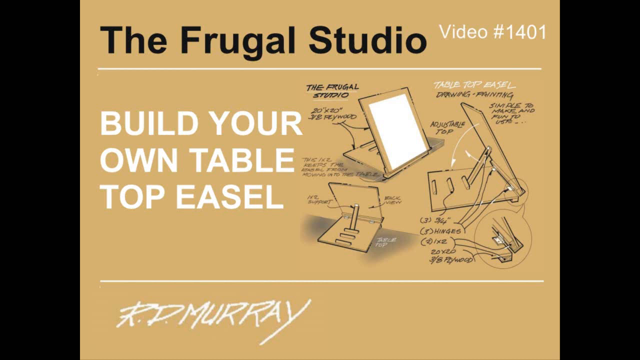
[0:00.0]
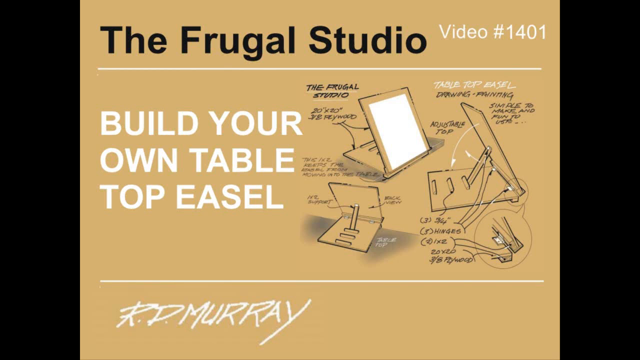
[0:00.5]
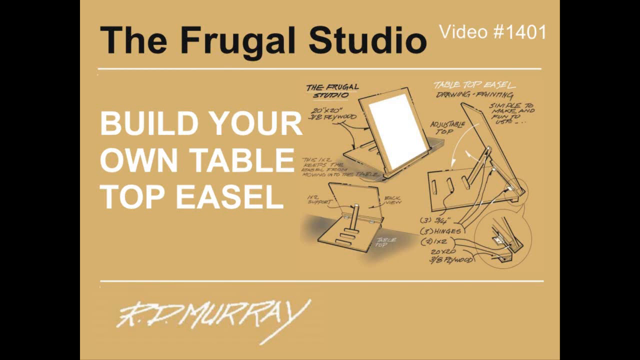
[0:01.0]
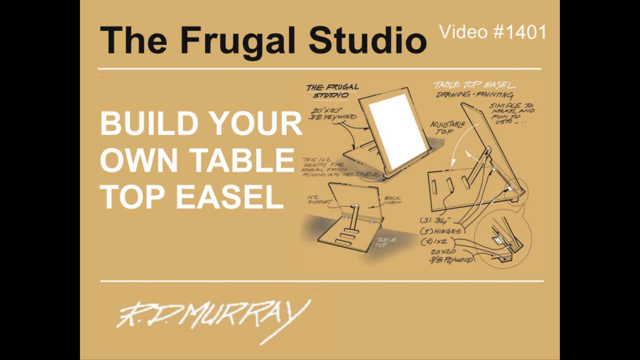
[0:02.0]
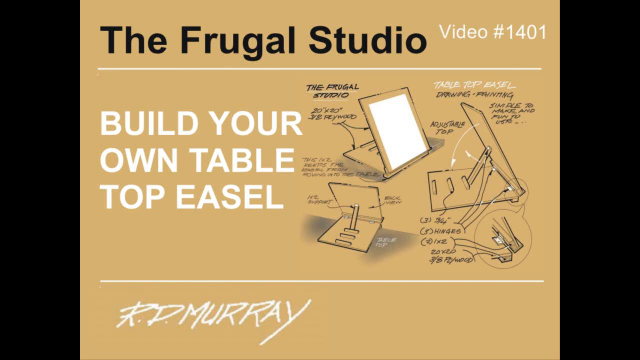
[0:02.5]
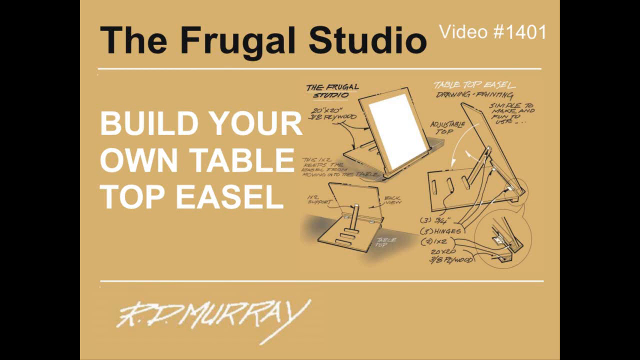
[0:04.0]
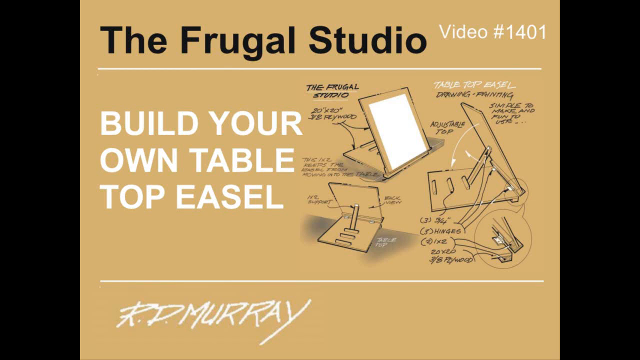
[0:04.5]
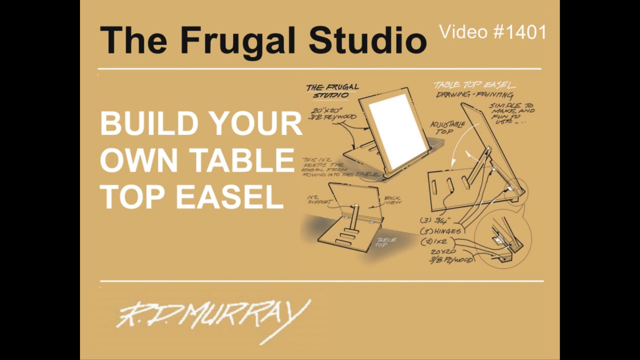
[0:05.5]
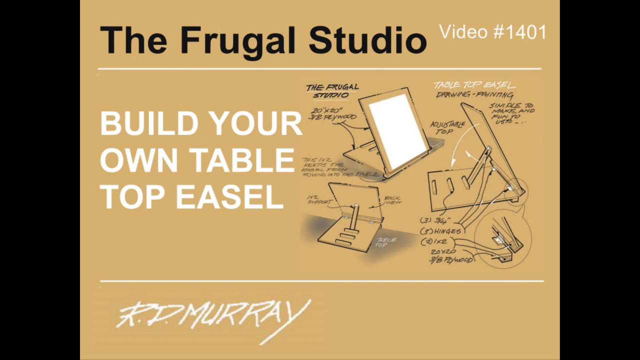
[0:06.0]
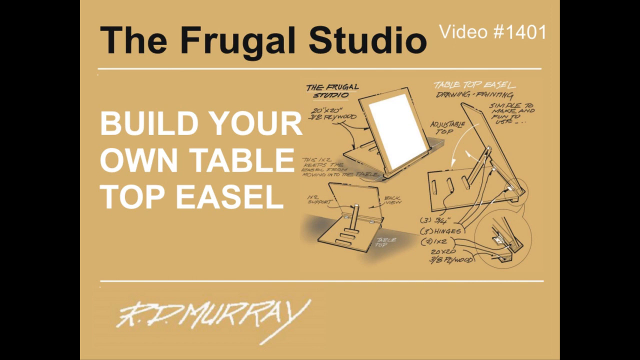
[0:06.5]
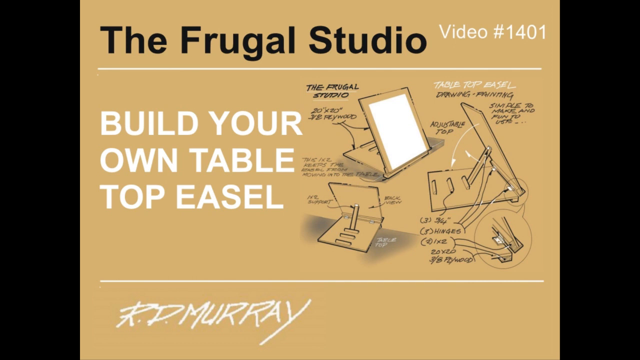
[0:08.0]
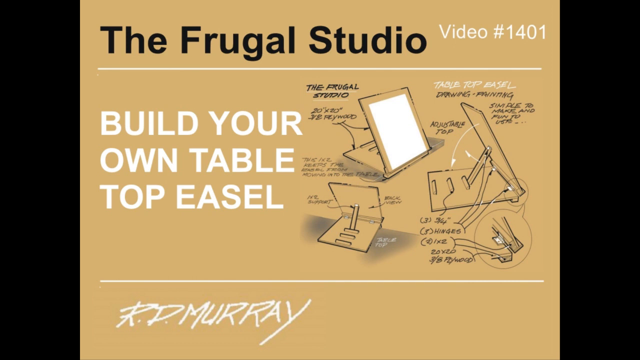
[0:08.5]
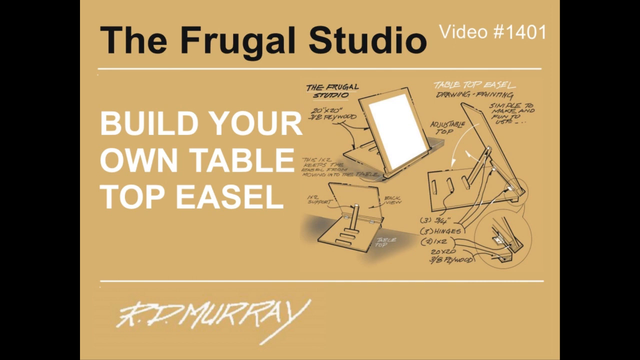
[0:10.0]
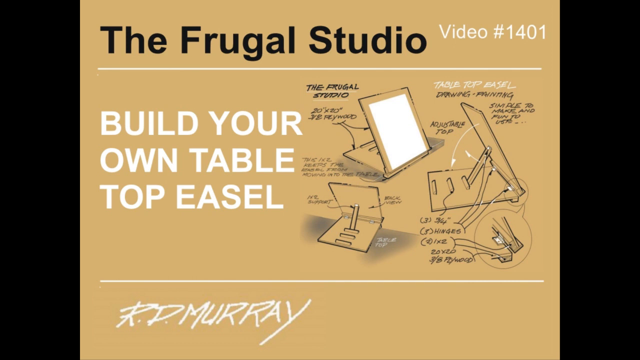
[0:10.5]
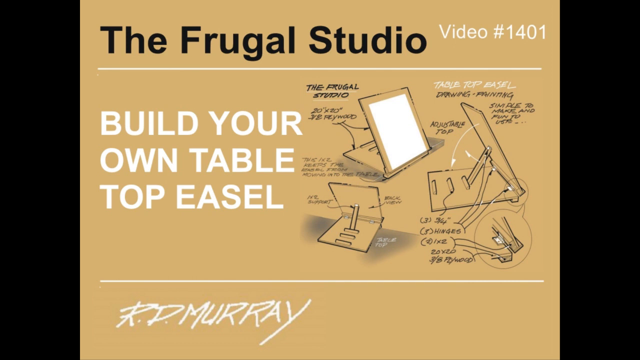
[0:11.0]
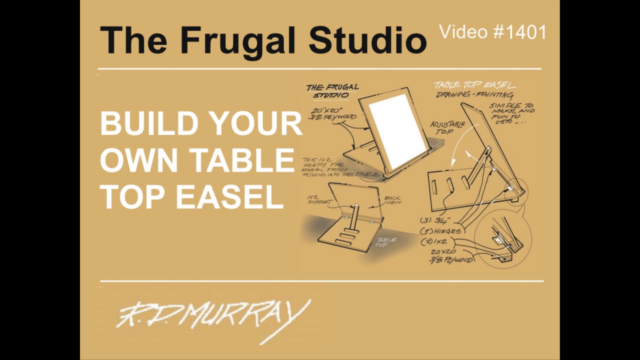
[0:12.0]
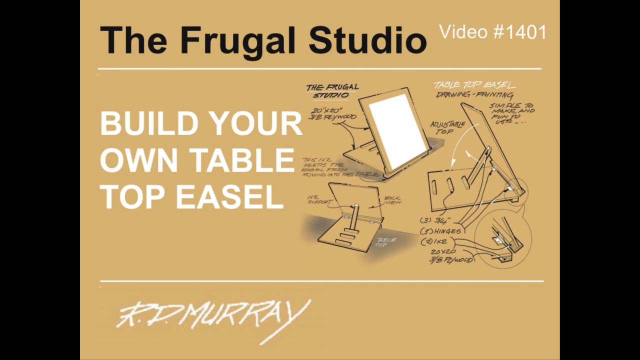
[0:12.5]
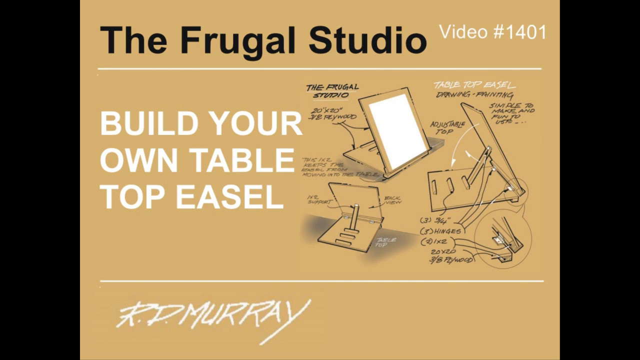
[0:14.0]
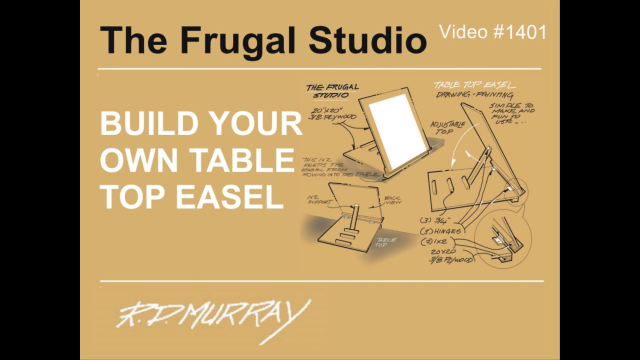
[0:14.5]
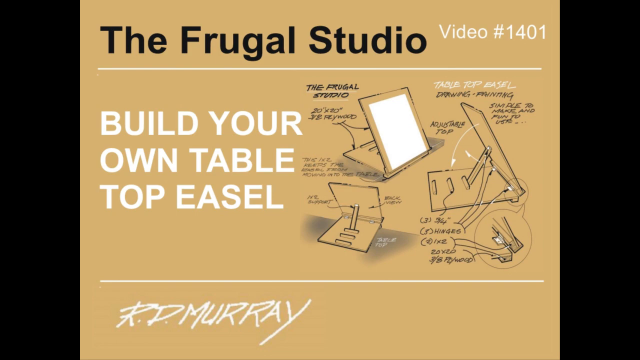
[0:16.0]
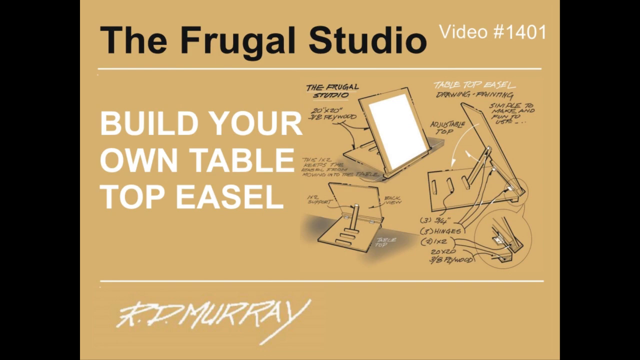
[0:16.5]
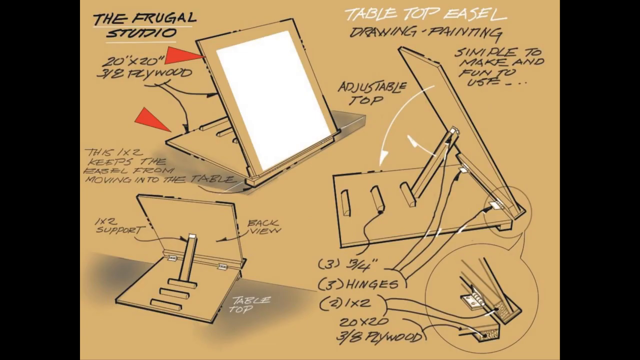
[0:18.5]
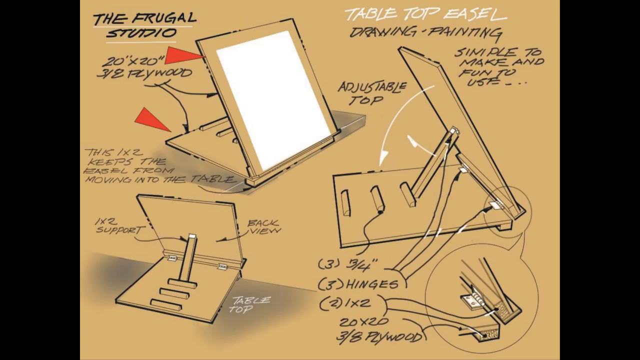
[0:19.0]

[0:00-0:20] A video by Mr. R. D. Murray at Frugal Studios gives a simple step-by-step explanation of how to build a tabletop easel for drawing and painting. The materials required are three 20 by 20 plywood, three hinges and an adjustable top. The video shows how to keep the easel from moving into the table, how to put the hinges at the back, and how the hinges offer support at the back.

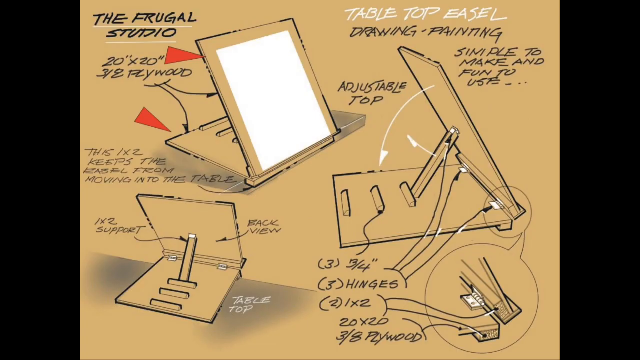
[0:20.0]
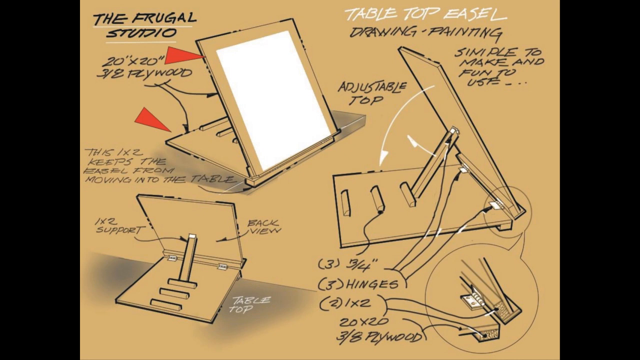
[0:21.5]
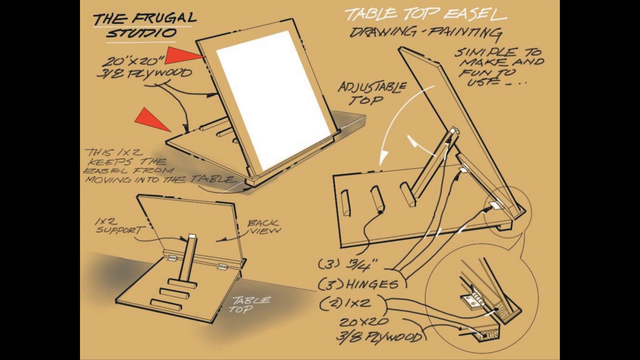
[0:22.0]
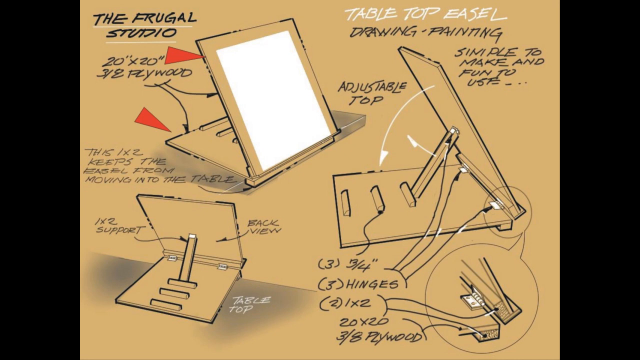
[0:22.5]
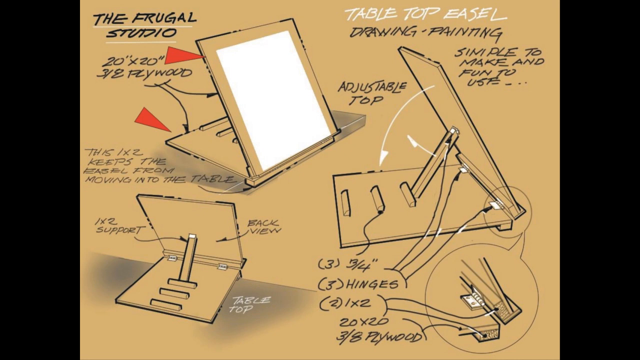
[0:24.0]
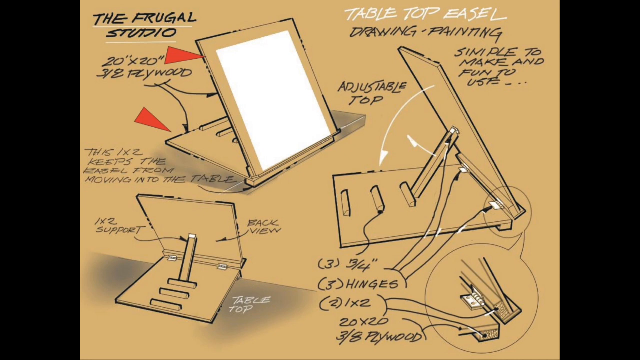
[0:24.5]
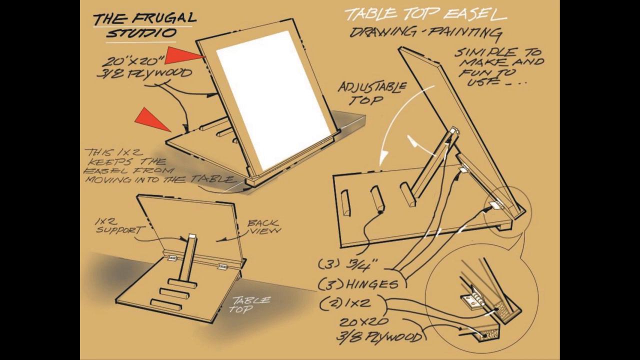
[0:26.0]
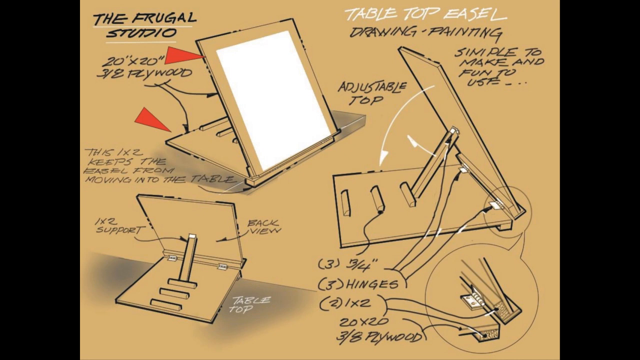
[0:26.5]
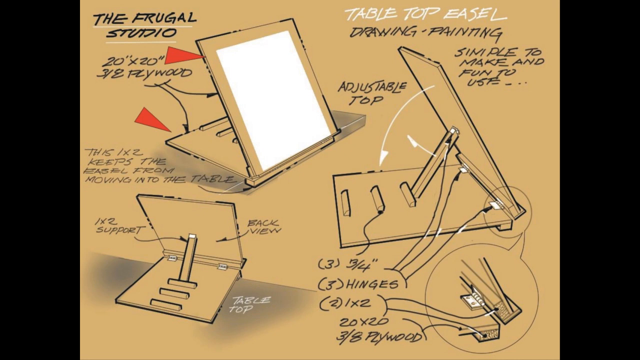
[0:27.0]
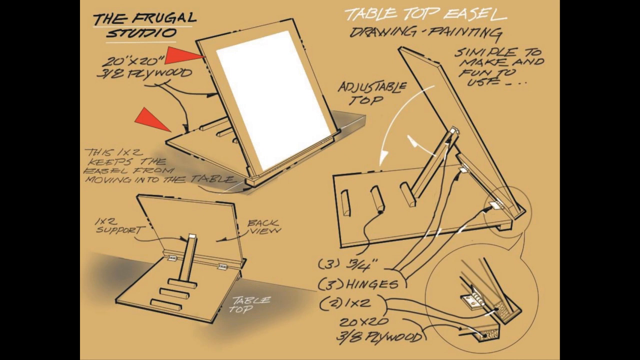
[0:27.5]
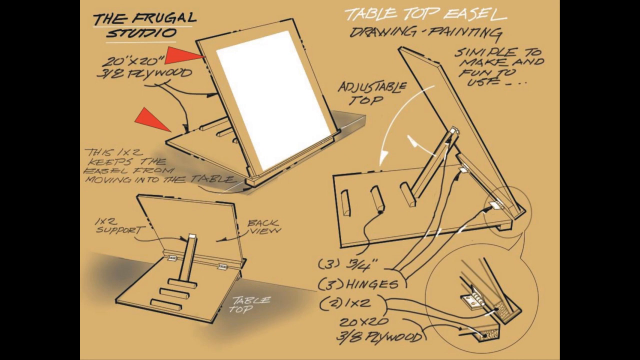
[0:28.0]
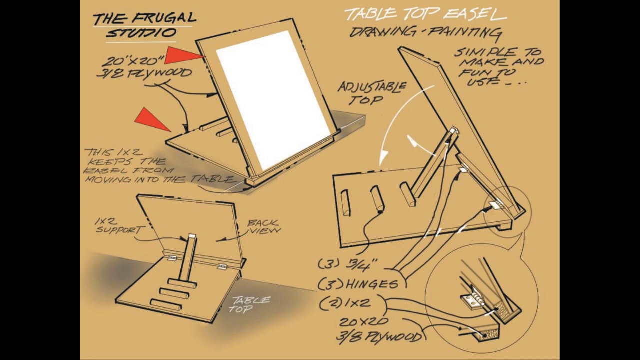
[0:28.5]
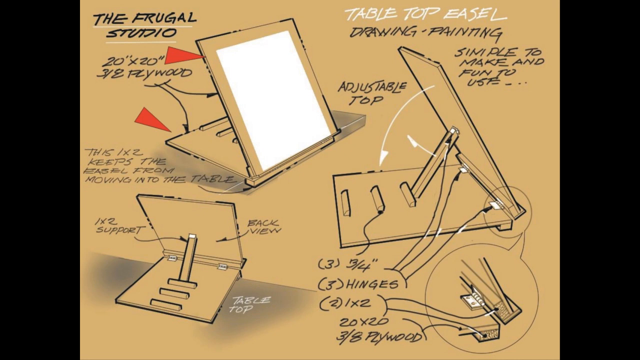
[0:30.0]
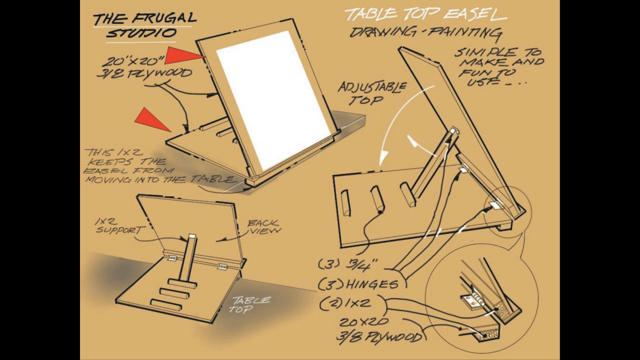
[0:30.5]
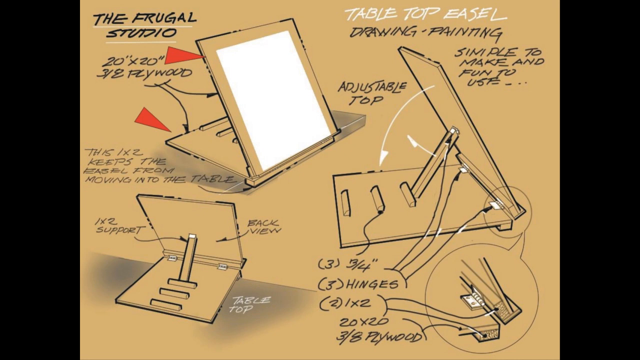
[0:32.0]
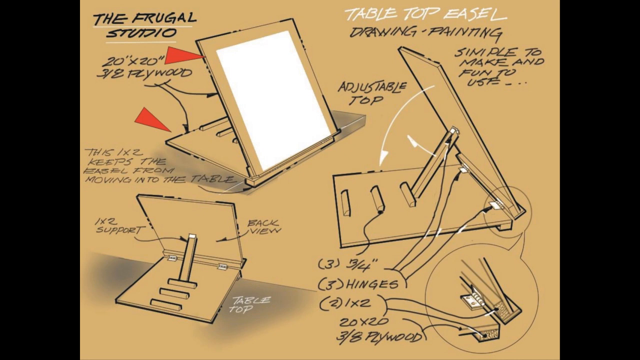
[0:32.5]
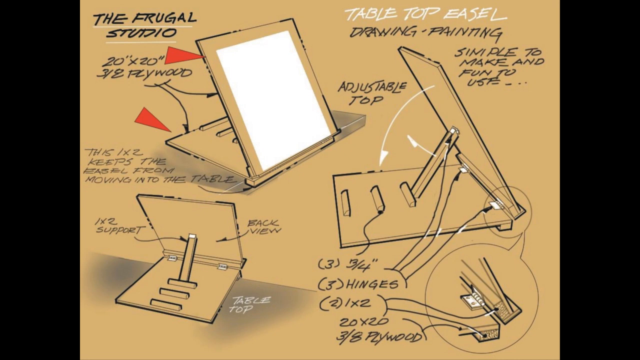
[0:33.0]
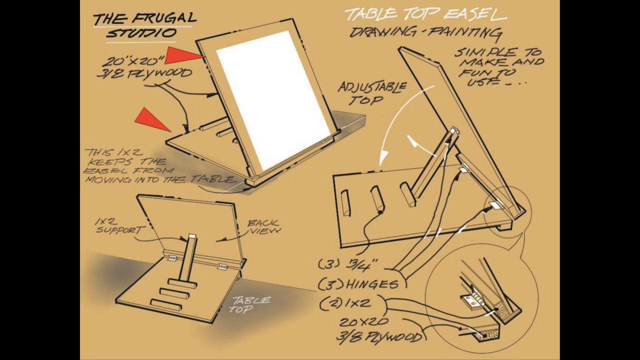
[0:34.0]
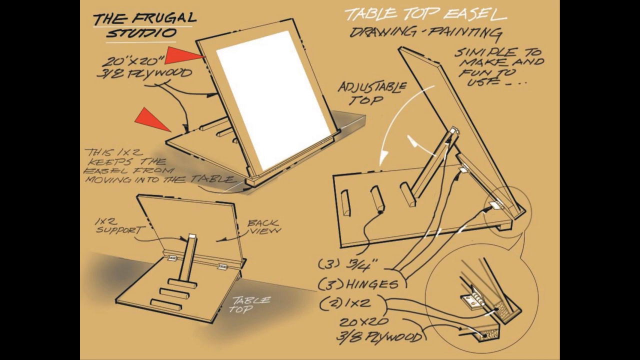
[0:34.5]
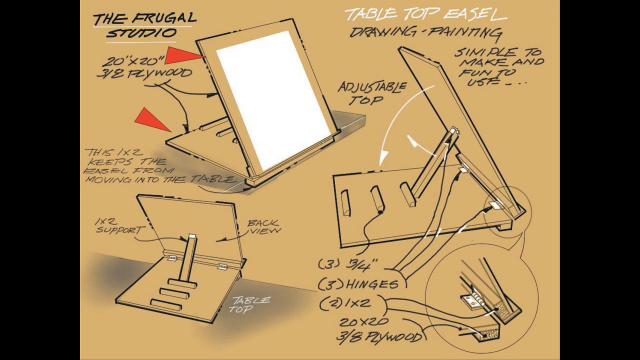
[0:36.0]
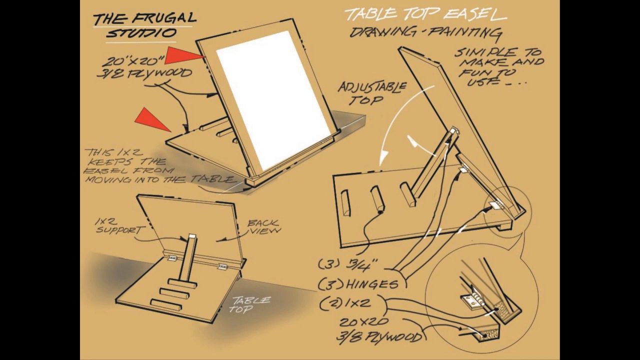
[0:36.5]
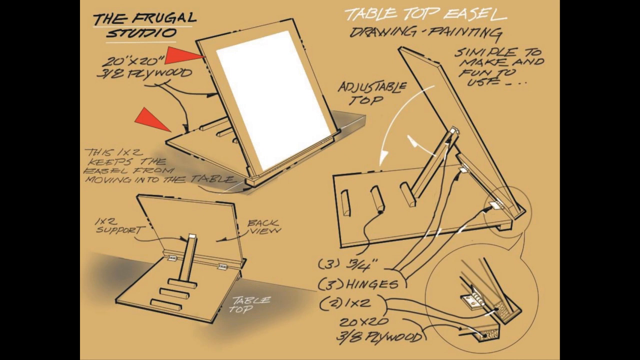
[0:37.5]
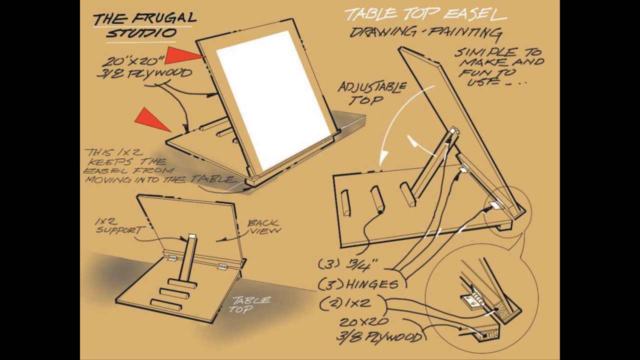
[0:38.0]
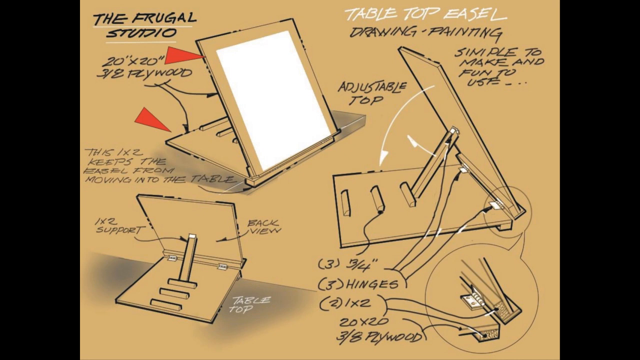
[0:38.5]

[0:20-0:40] The step-by-step guide to building a tabletop easel for drawing and painting, by Mr. R. D. Murray at Frugal Studios, lists the materials: three 20 by 20 plywood, three hinges and an adjustable top. The back of the tabletop is shown with the hinges, illustrating how the hinges provide support.